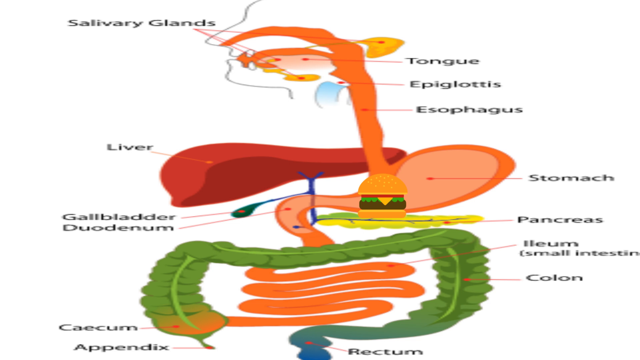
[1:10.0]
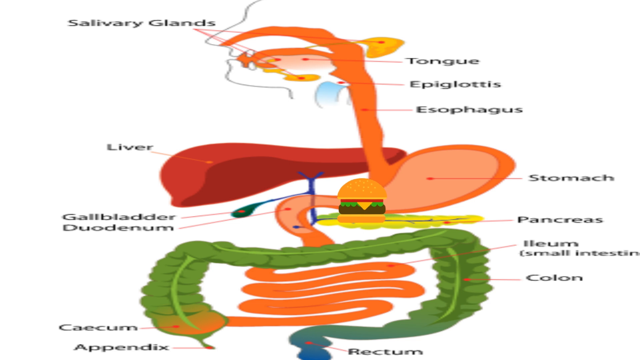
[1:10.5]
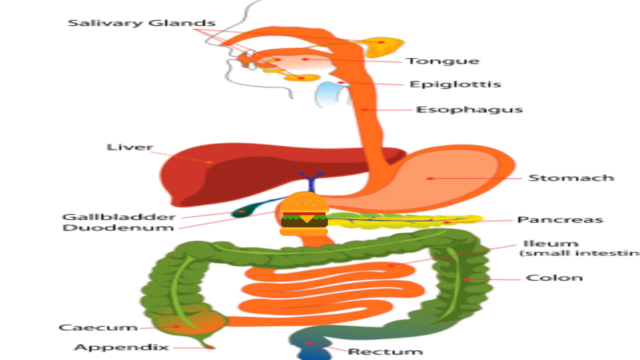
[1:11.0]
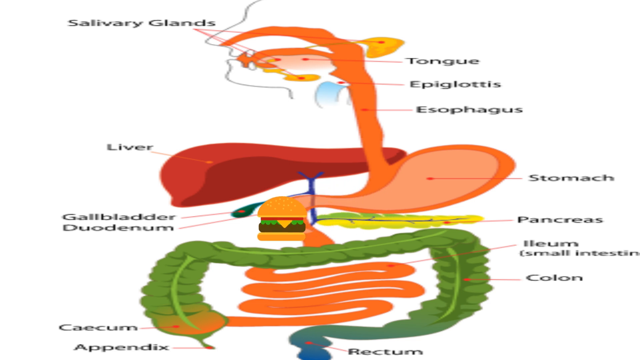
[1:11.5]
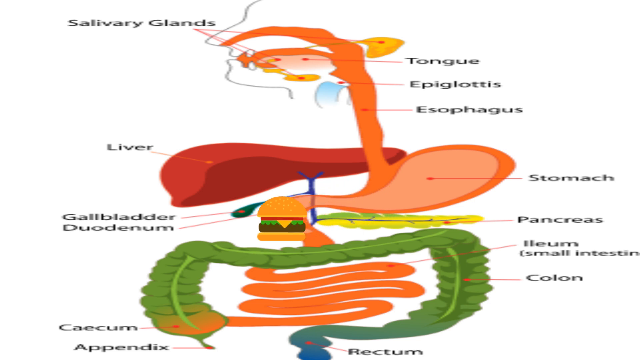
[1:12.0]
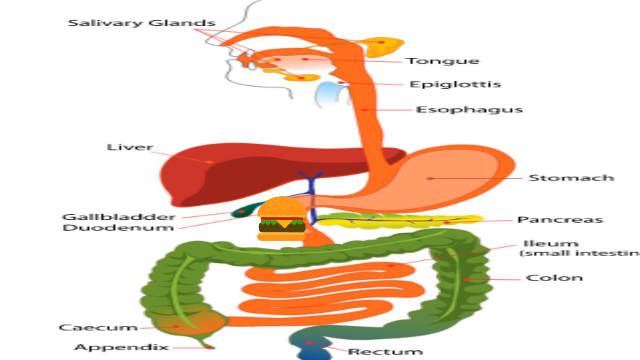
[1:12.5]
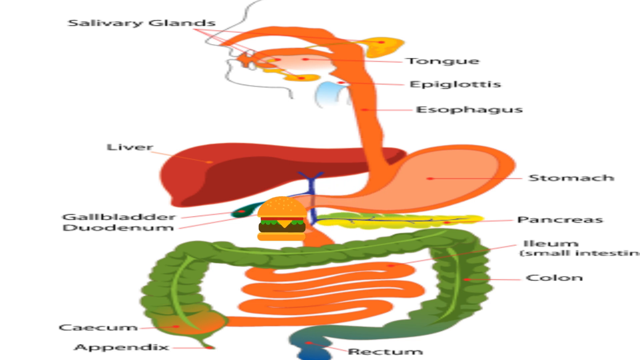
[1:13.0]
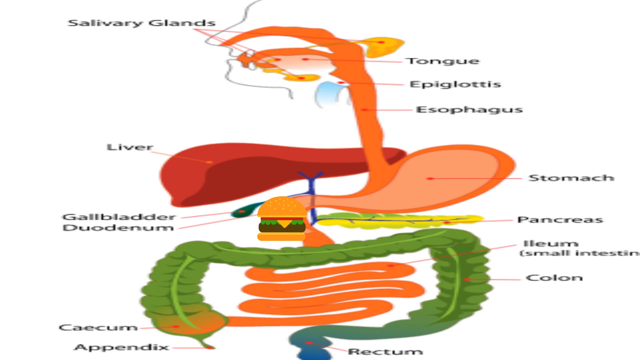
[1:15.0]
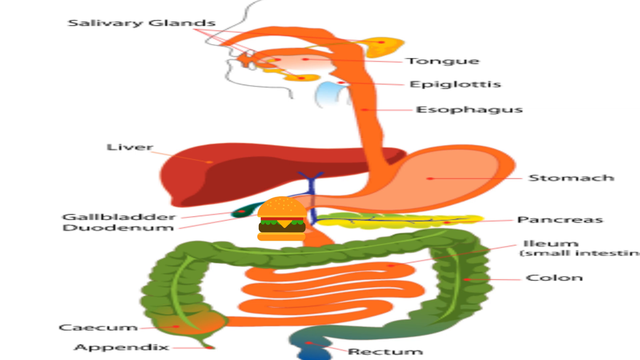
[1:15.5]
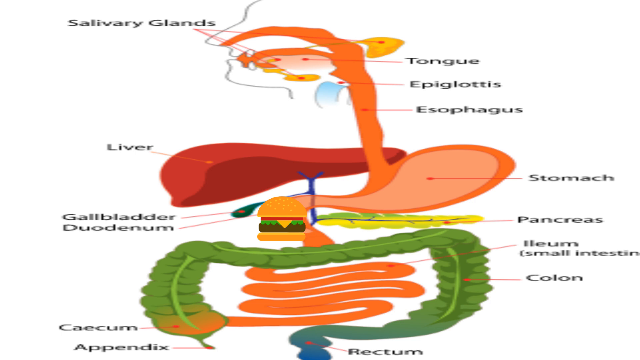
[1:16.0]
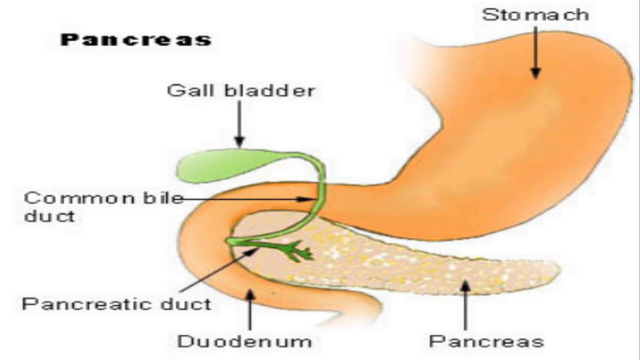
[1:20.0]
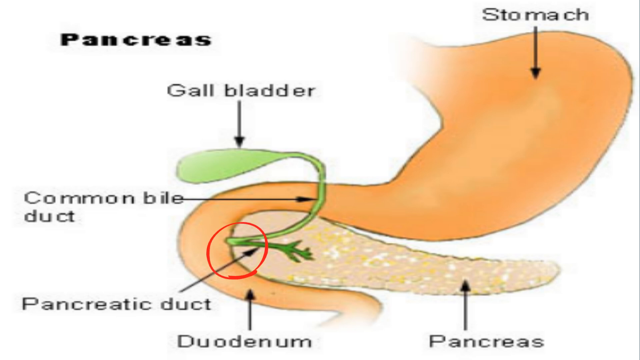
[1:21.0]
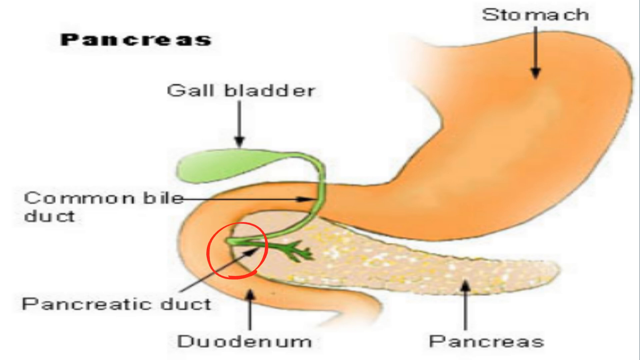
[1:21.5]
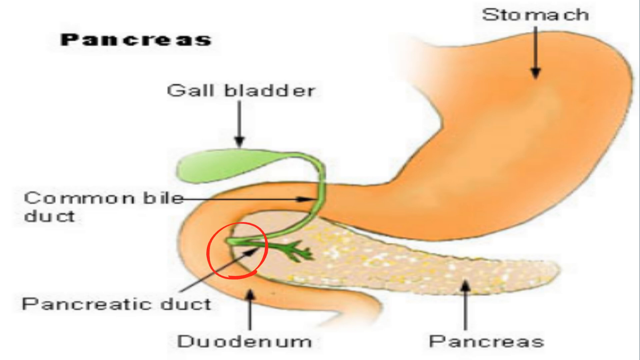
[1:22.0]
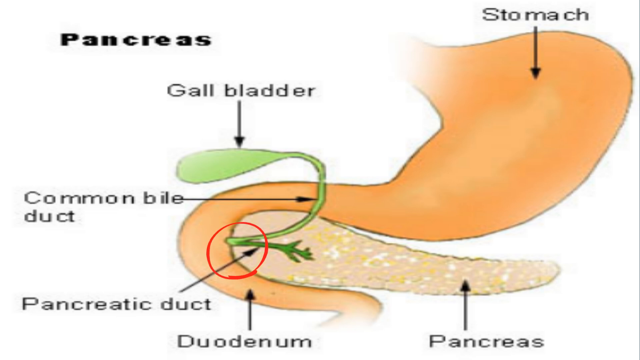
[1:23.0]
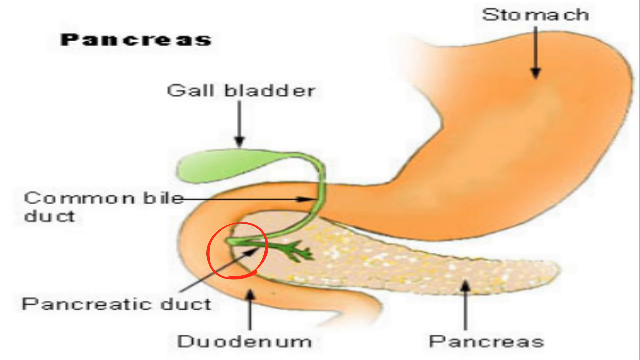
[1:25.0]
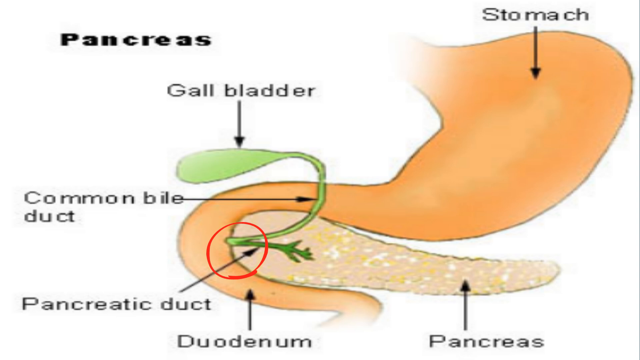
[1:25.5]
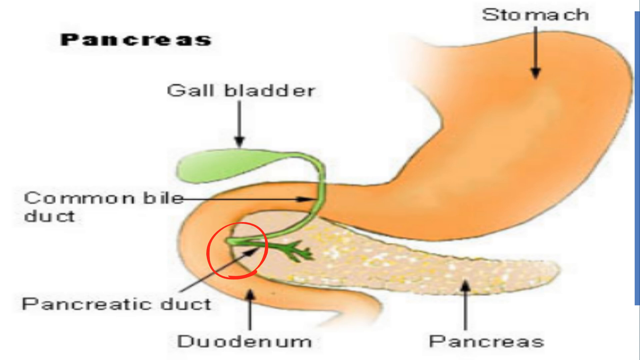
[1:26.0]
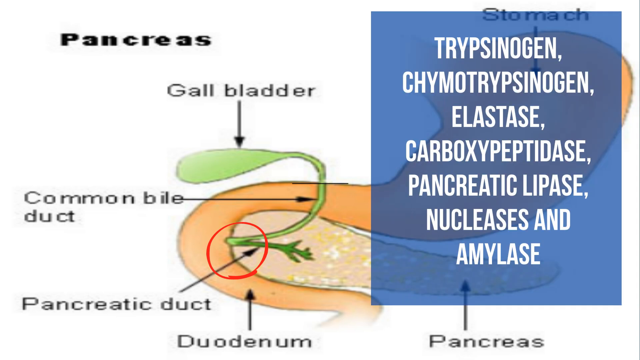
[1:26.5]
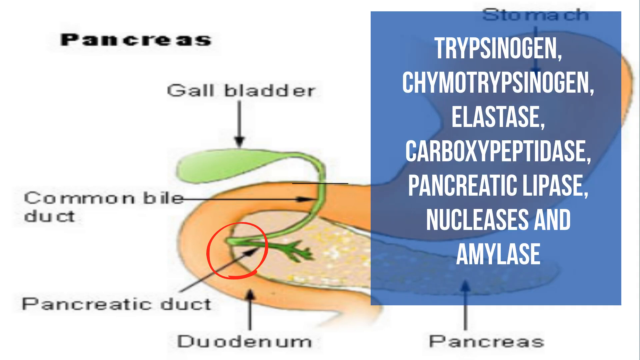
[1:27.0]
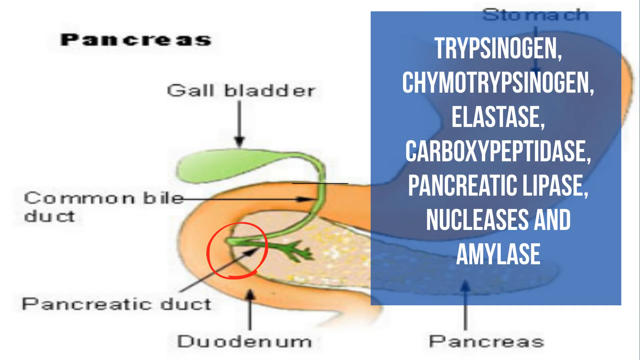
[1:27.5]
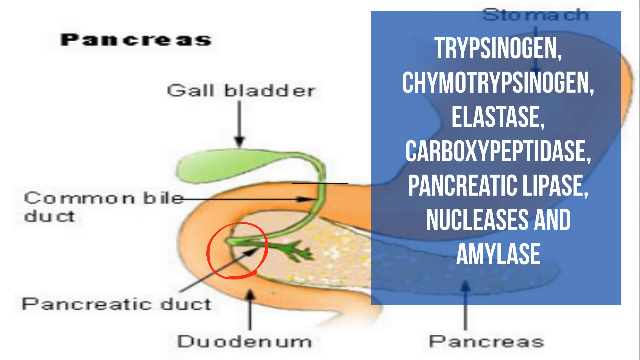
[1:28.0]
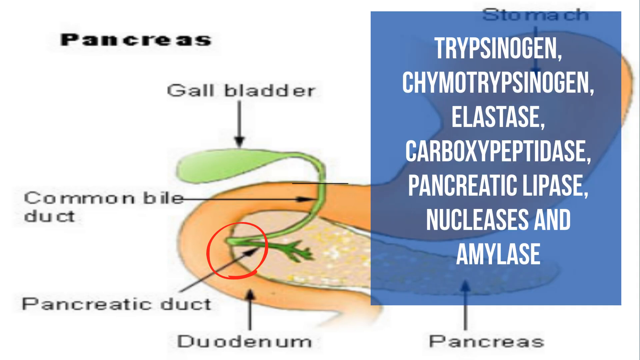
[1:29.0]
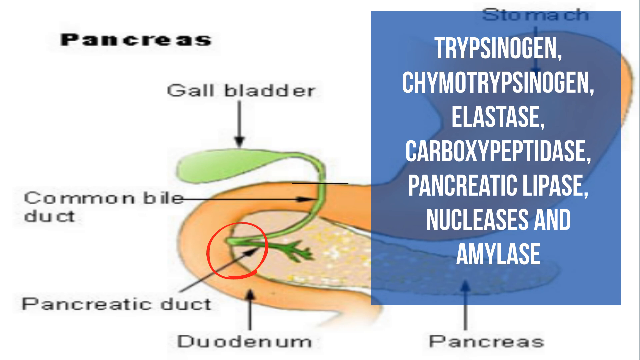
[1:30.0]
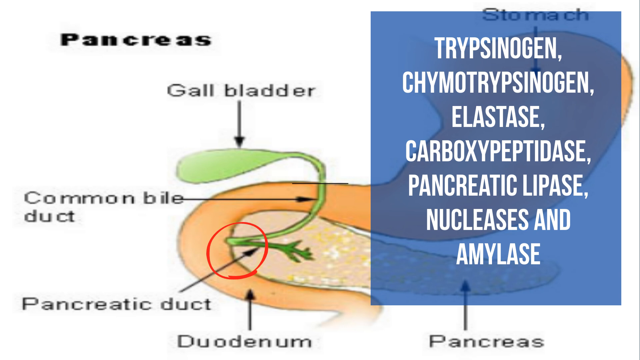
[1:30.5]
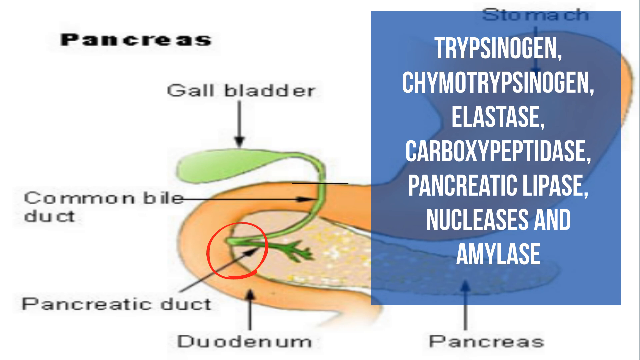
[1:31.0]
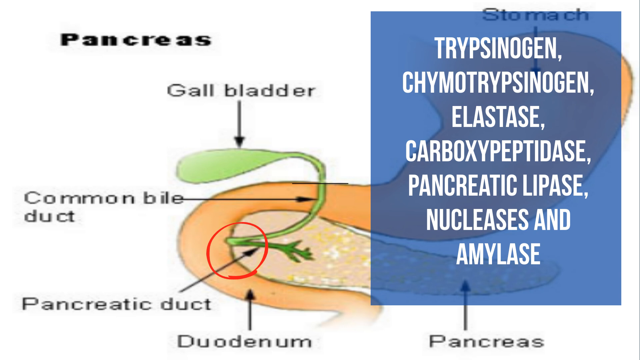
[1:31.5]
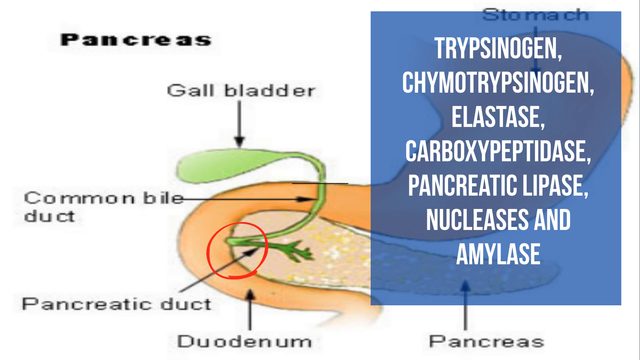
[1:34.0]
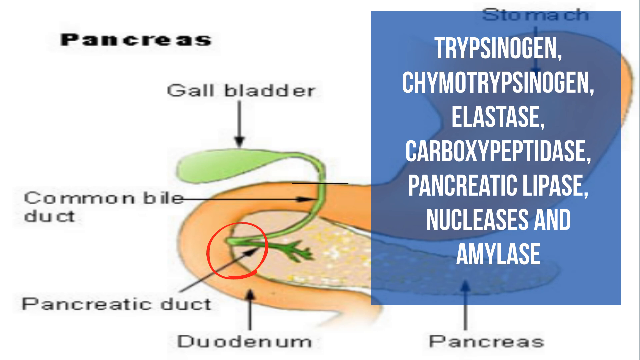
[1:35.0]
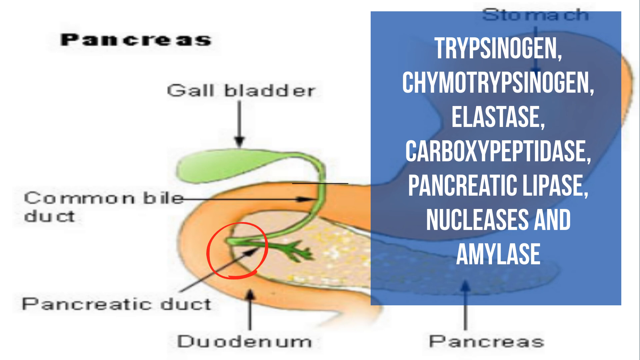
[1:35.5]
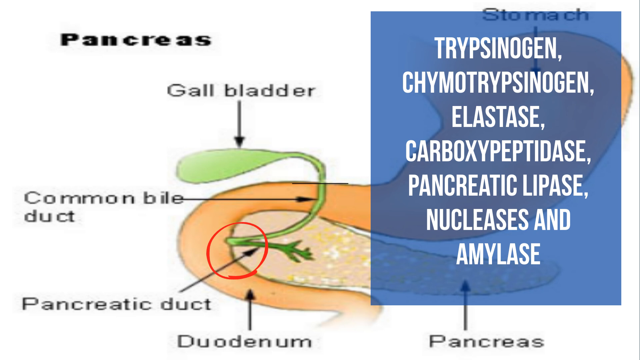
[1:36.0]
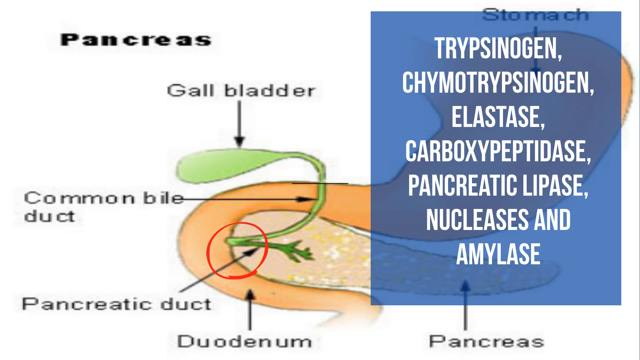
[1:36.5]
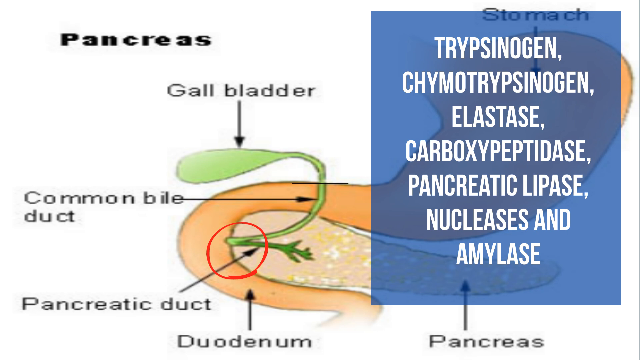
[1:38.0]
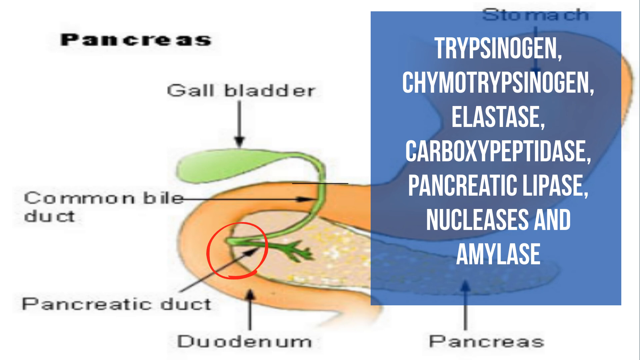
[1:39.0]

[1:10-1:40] Colorful images show a human's stomach, intestines, pancreas, epiglottis, esophagus, liver, bowel, bladder and duodenum, then the salivary glands and the anus. The pancreas is shown right under the gallbladder, and something in the pancreas looks like a flower and is greenish.